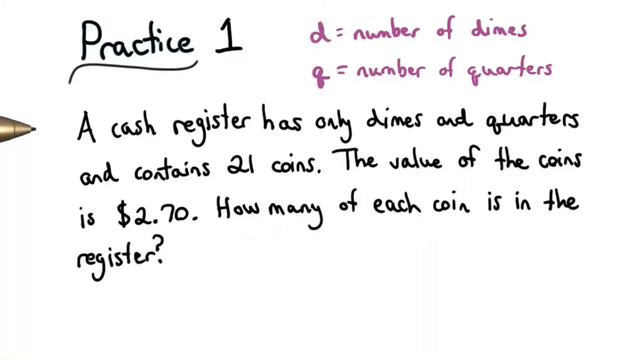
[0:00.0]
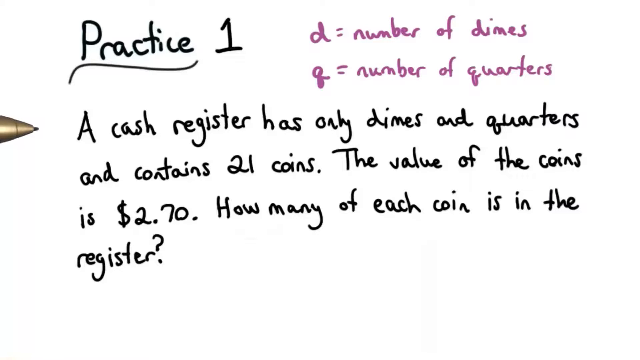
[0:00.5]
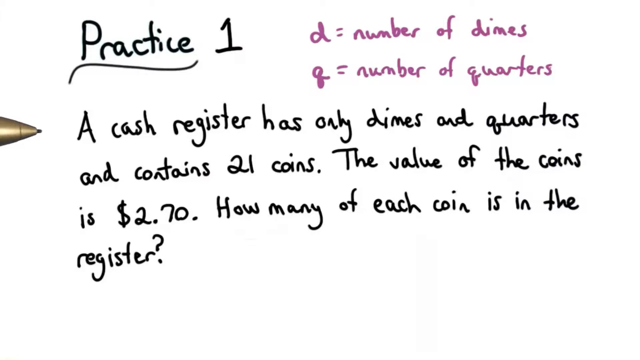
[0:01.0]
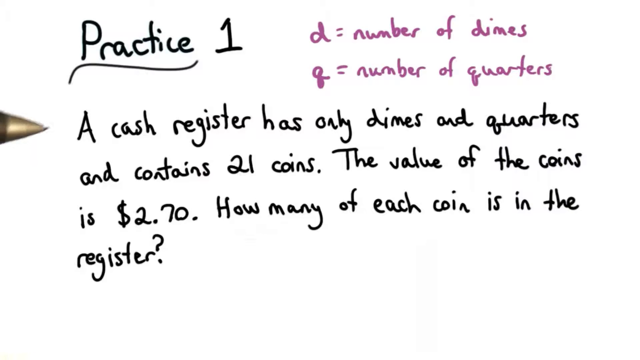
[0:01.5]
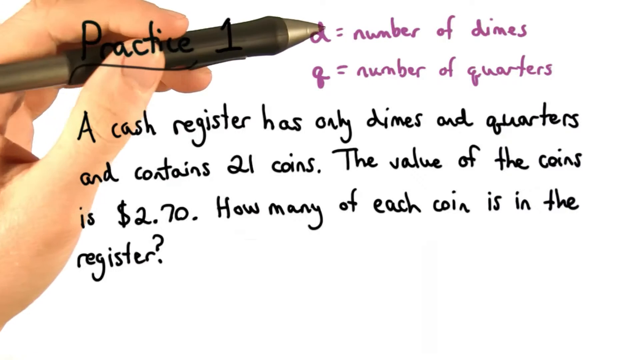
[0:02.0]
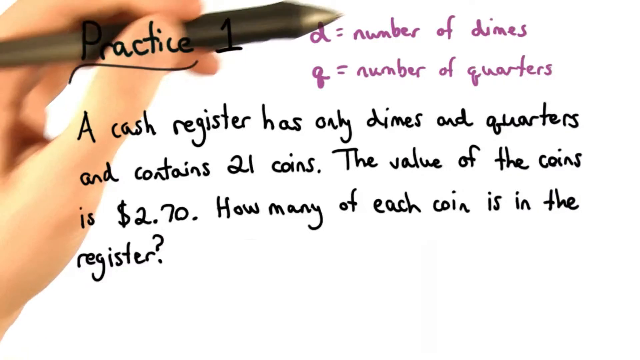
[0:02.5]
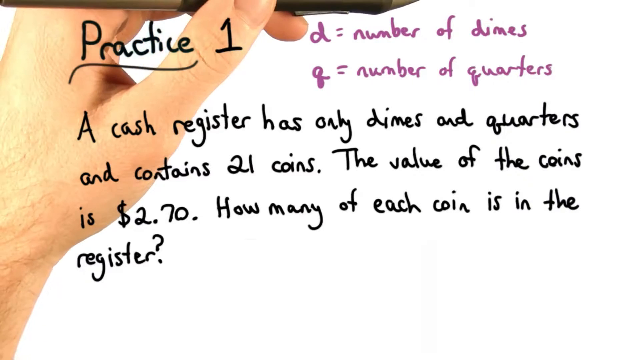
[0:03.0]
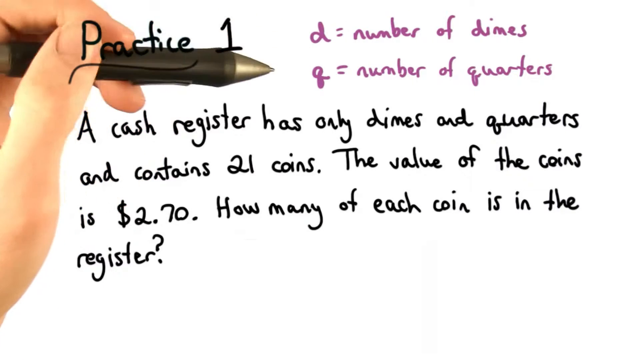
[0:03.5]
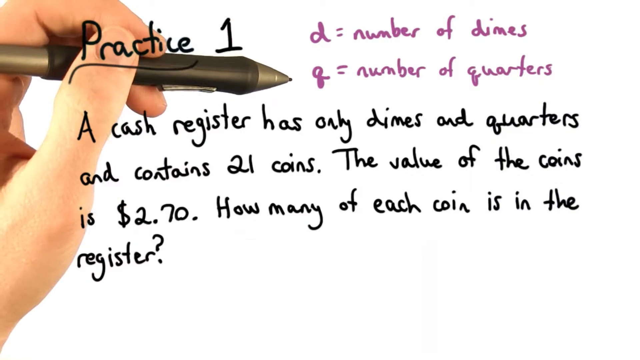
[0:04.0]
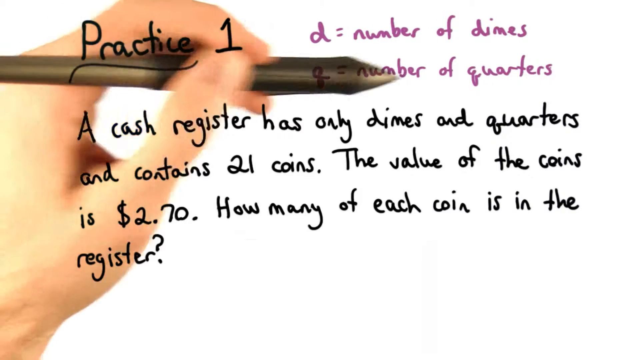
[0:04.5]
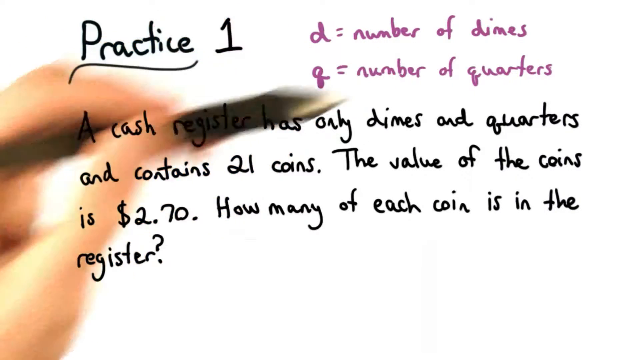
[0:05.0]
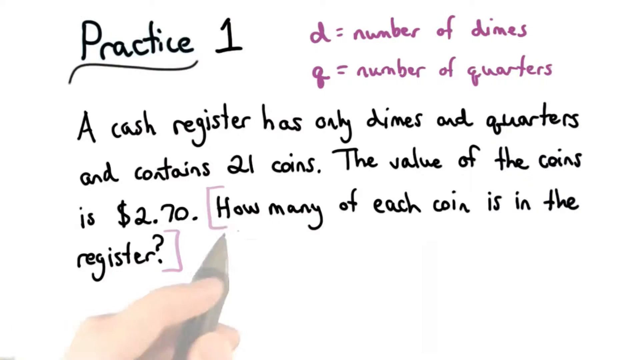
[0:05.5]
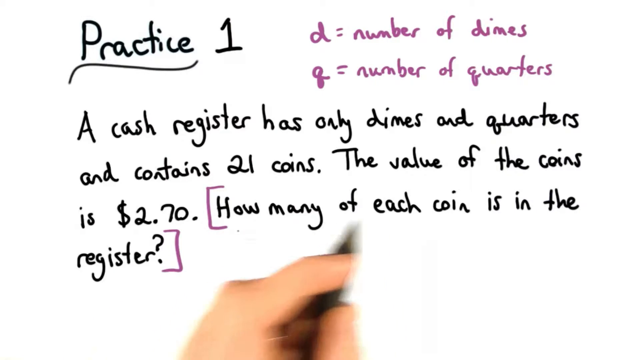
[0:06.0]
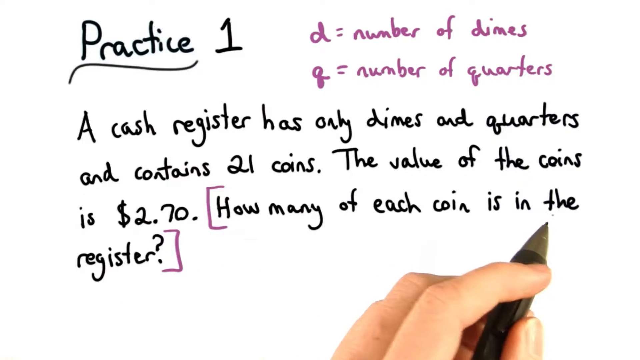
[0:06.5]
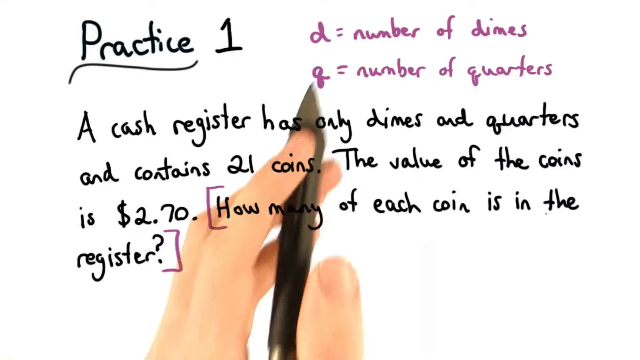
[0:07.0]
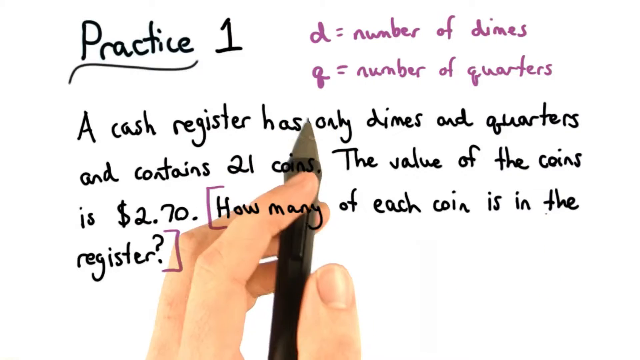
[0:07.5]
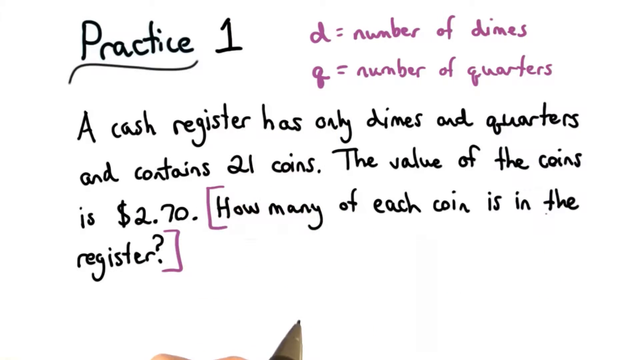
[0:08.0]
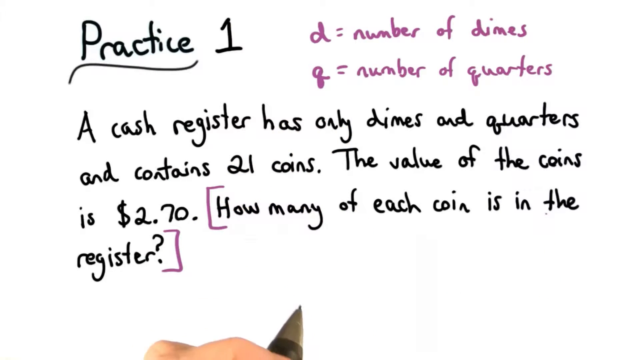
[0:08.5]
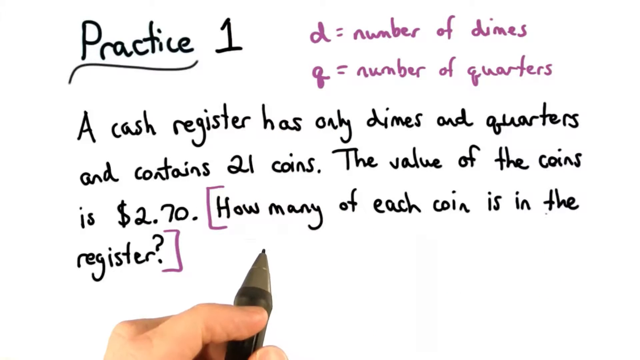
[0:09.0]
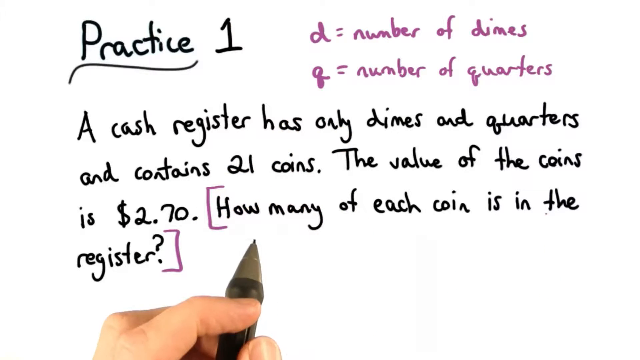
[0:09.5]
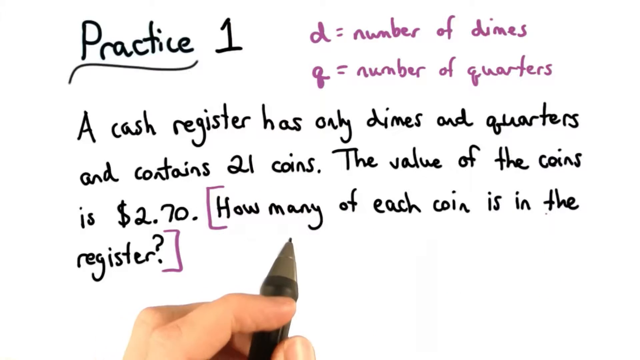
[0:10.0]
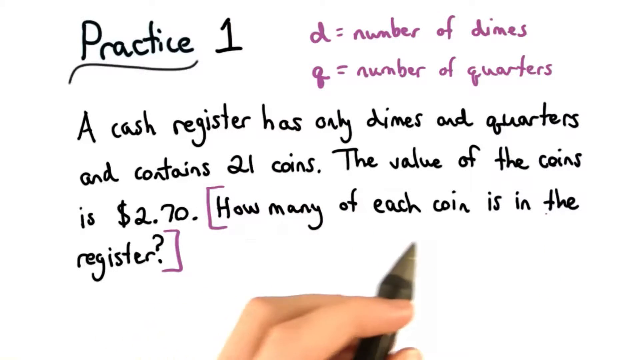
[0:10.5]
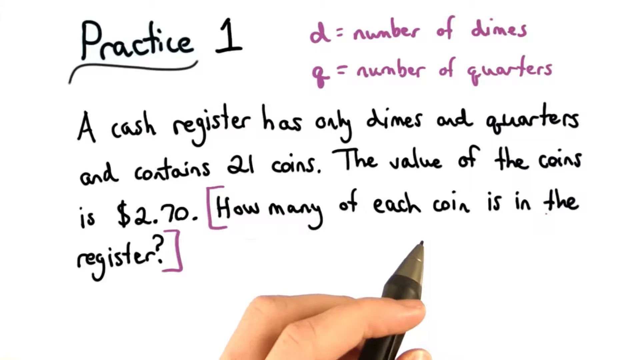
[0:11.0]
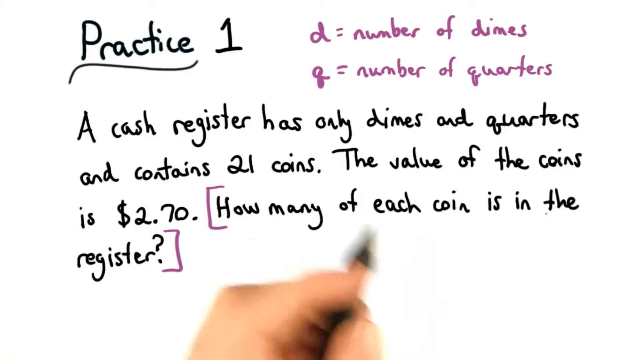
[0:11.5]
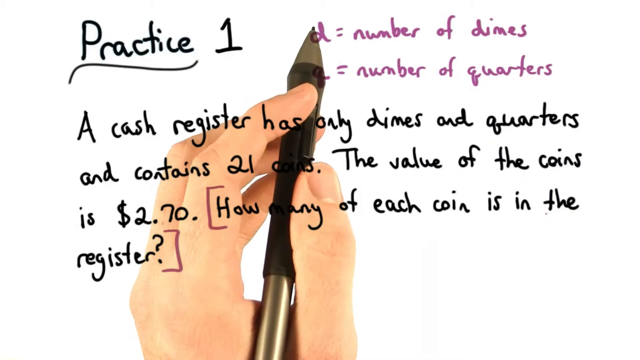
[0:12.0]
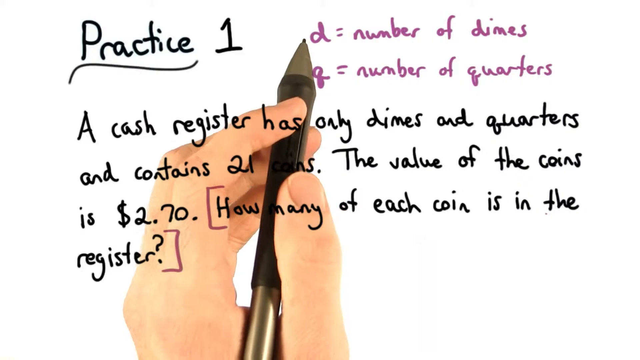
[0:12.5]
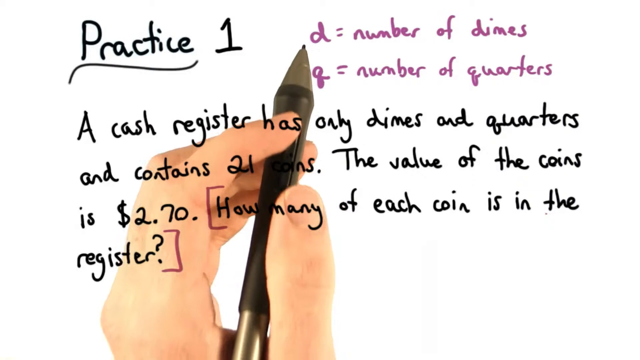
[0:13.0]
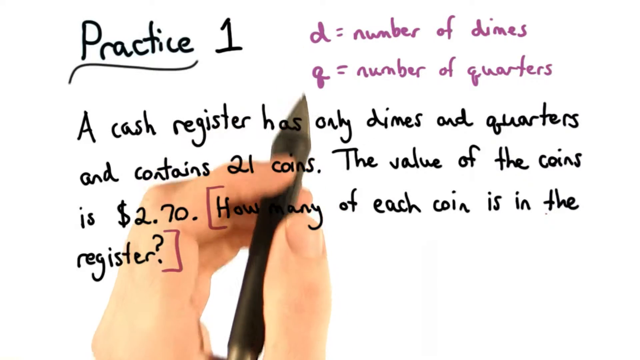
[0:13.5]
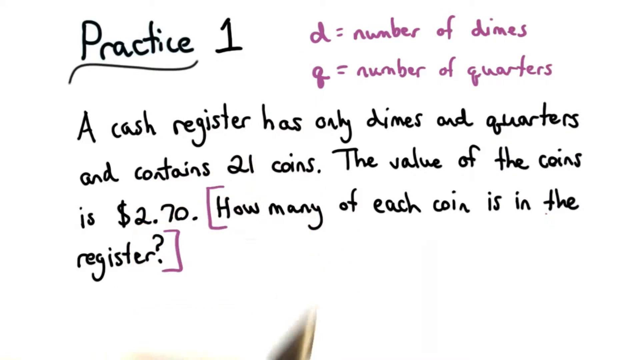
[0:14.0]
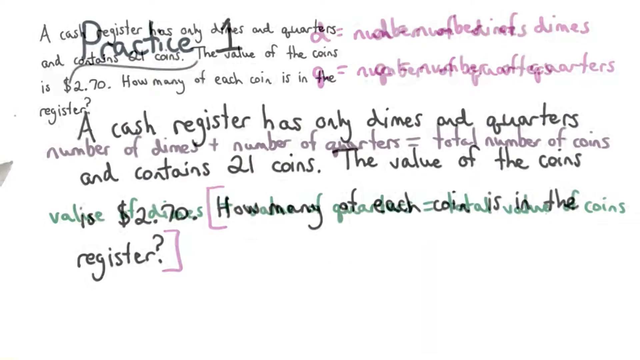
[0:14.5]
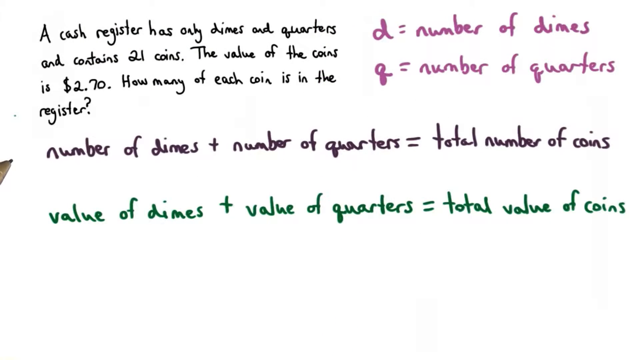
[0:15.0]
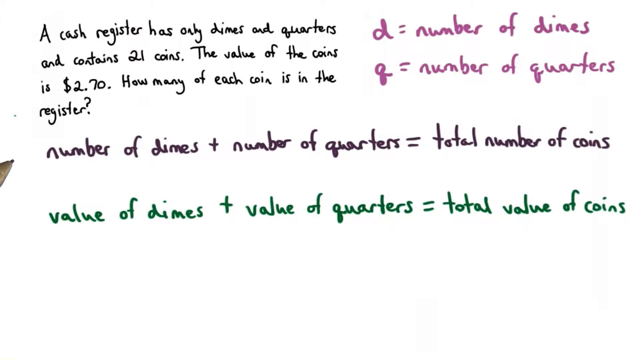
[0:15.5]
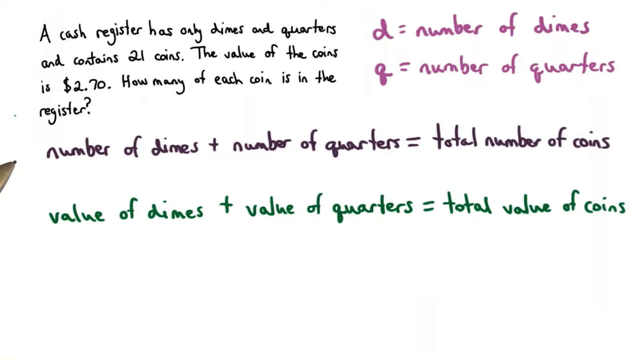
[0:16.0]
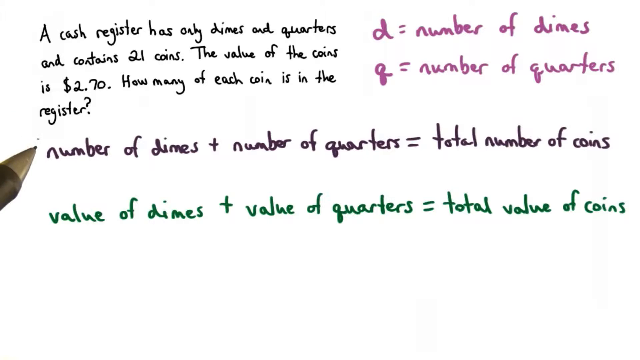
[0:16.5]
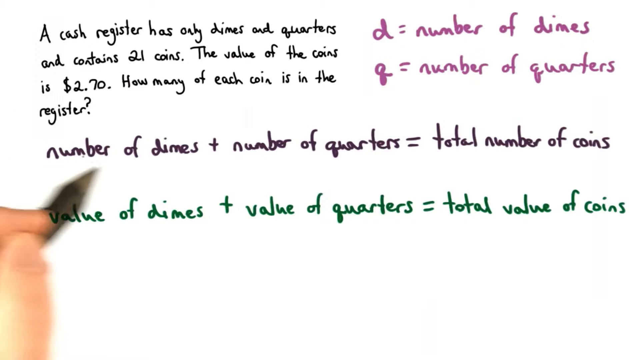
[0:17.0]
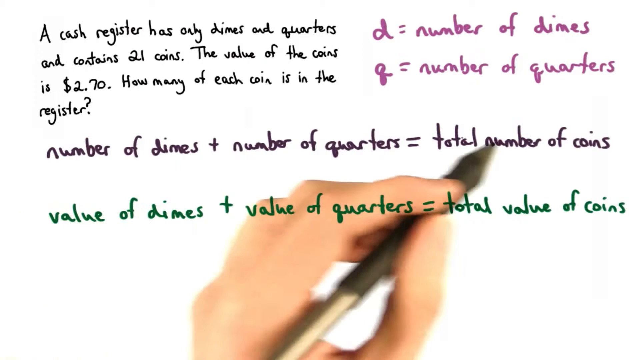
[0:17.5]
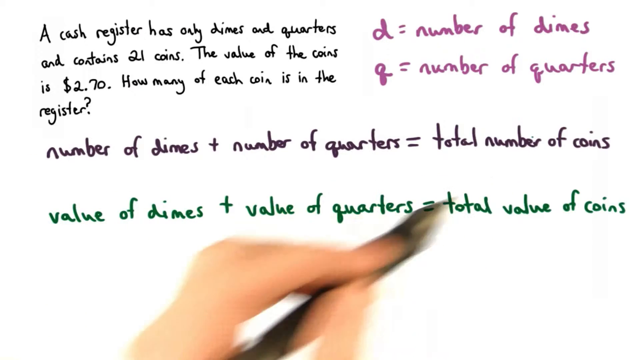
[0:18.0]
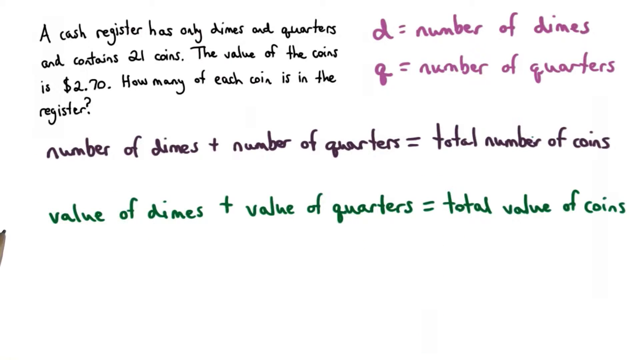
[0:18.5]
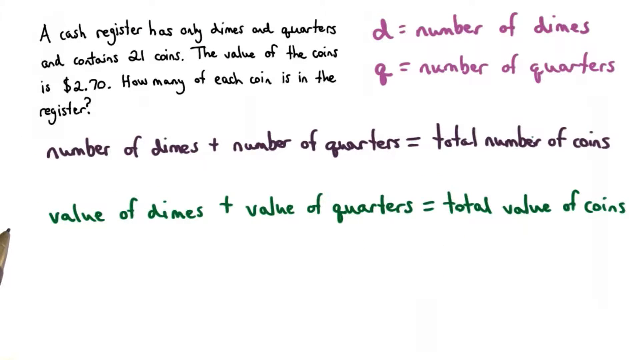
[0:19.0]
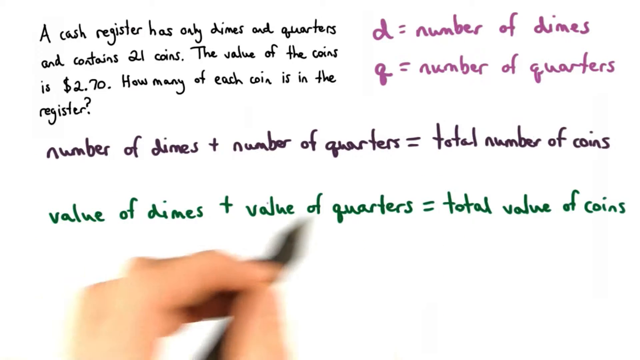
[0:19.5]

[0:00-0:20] The video opens on a white screen with a gradient to black across roughly the bottom 20% of the frame, giving an illusion of depth. A pen with a brass tip comes in from the left side of the frame toward the middle. The opening screen has handwritten text: "practice" in black, underlined, followed by the number one in purple. Most of the text is black. In purple it reads "d = number of dimes" and beneath that "q = number of quarters". The body text, in black, reads "a cash register has only dimes and quarters and contains 21 coins. The value of the coins is $2.70. How many of each coin is in the register?" A Caucasian hand with unpainted nails brings the pen into frame from the left, hovering the tip over the d, indicating "number of dimes", then the q, then pointing at "number of quarters". The hand fades out and comes back in at the bottom of the screen, where four fingers steady the pen and a couple of fingers hold it. Purple brackets now mark the "how many of each coin is in the register" portion, with a bracket at each end of that sentence to highlight it. The pen gestures at that sentence, then at the d and the q, then at the body text, then pulls down off screen and comes back up. It emphasizes each word of "how many of each coin", returns to the d and the q, and goes off screen again. The screen changes to the same white background, now with the original cash register question in the upper left quadrant and, beside it in purple, "d = number of dimes" and "q = number of quarters" as before. Beneath that is written in black "number of dimes + number of quarters = total number of coins", and the same statement is repeated in green beneath it. The hand brings the pen in from the left side of the frame, held in a standard grip with the thumb, forefinger and middle finger, and drags it across the black sentence and the green one.